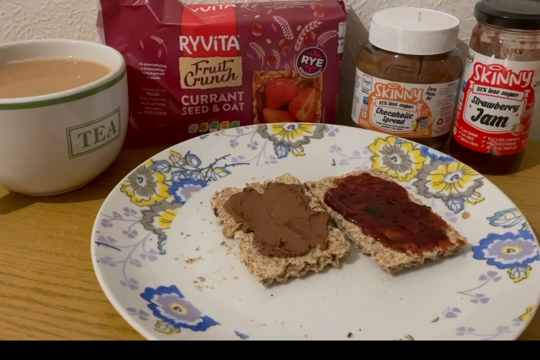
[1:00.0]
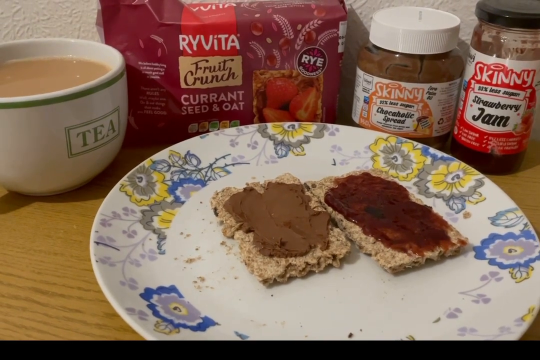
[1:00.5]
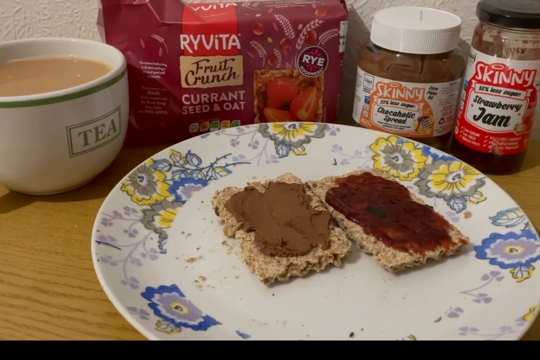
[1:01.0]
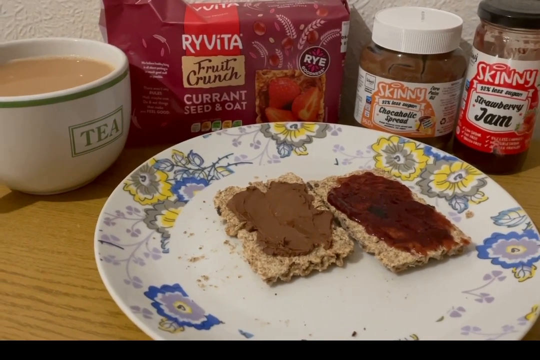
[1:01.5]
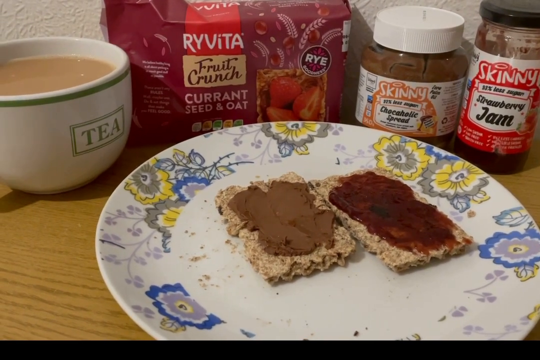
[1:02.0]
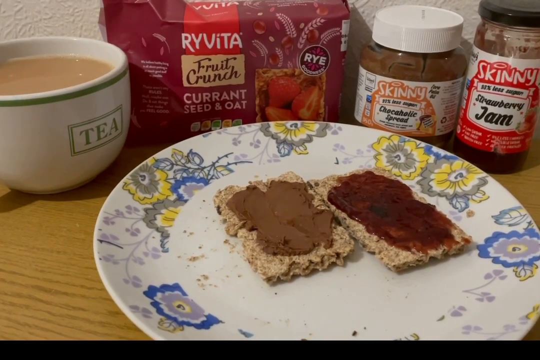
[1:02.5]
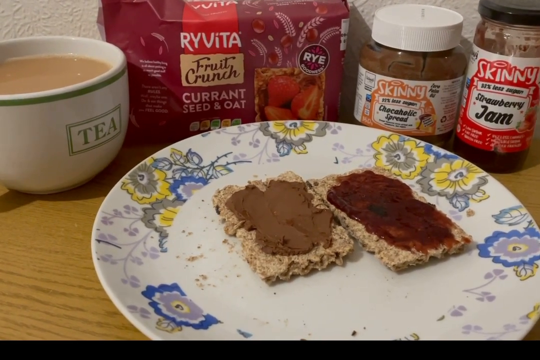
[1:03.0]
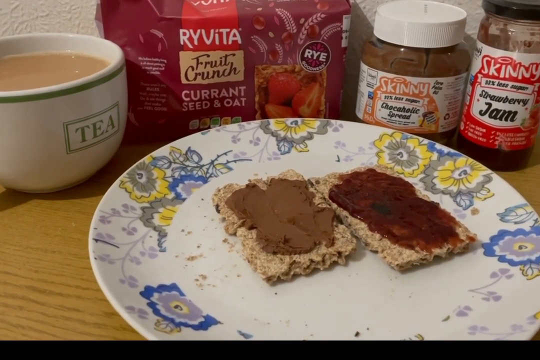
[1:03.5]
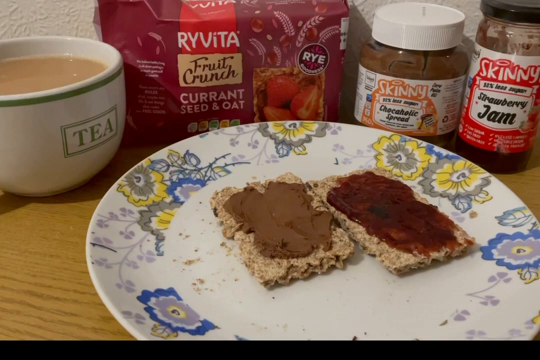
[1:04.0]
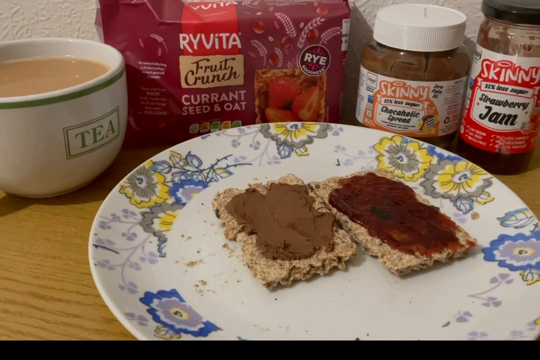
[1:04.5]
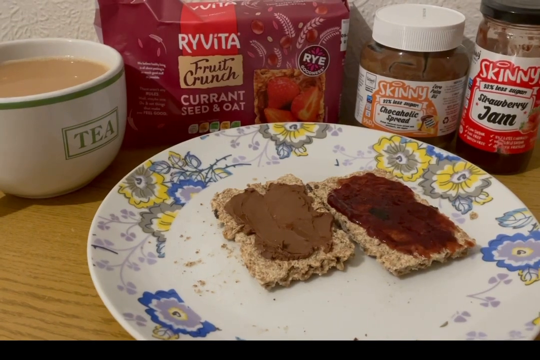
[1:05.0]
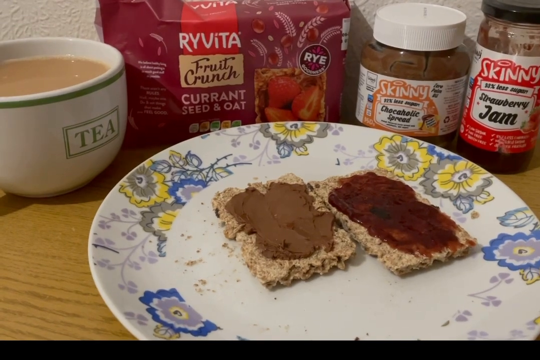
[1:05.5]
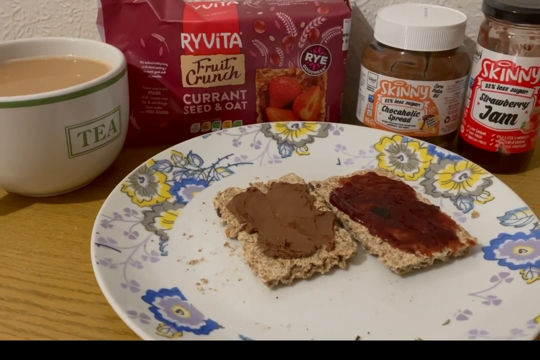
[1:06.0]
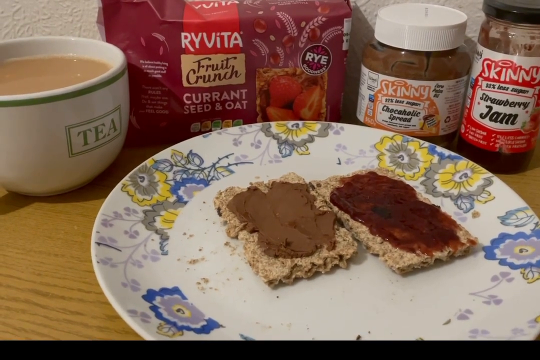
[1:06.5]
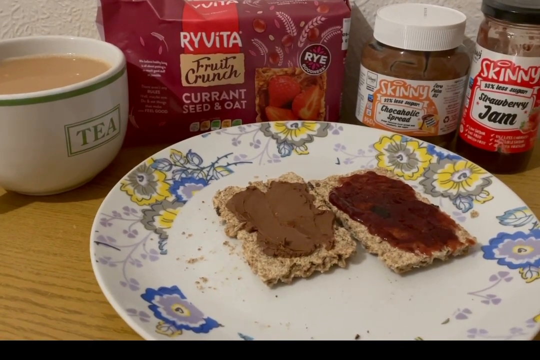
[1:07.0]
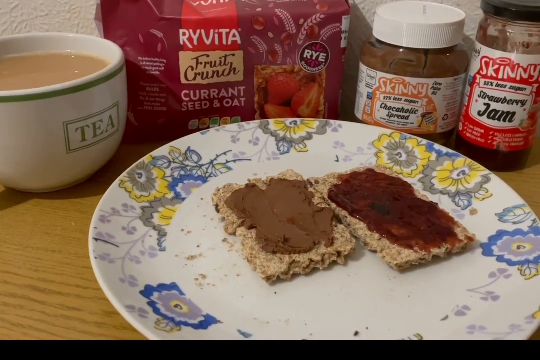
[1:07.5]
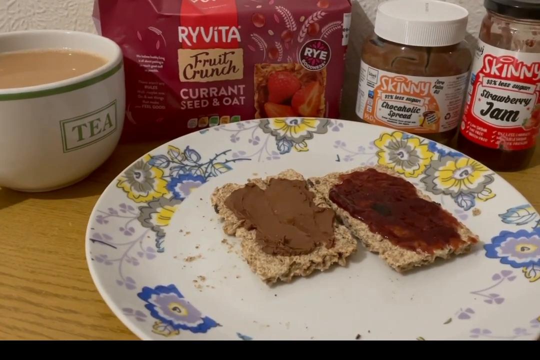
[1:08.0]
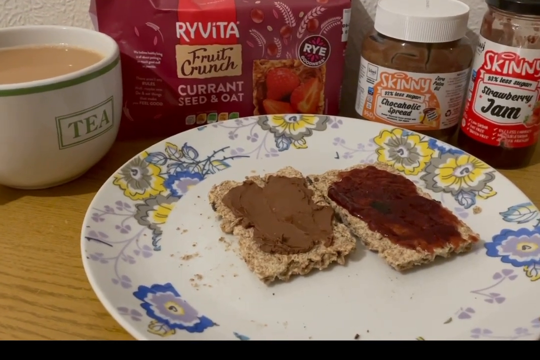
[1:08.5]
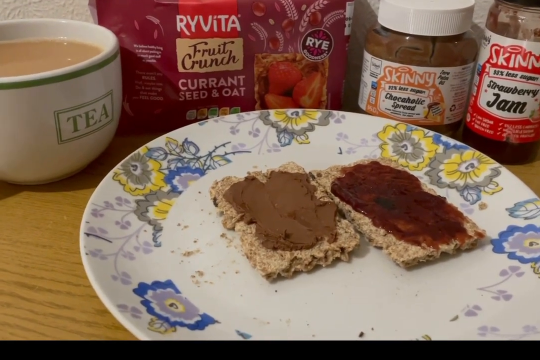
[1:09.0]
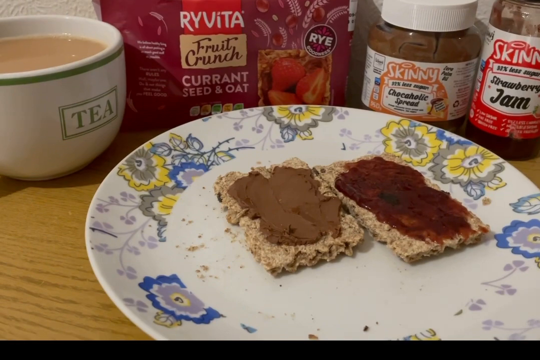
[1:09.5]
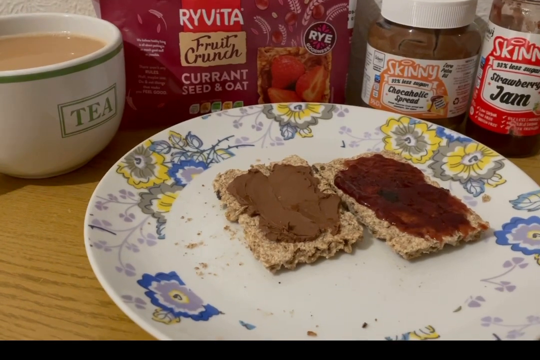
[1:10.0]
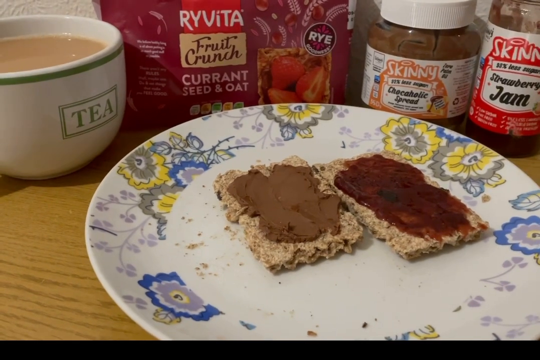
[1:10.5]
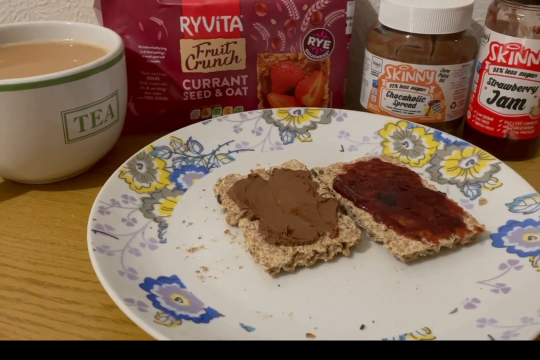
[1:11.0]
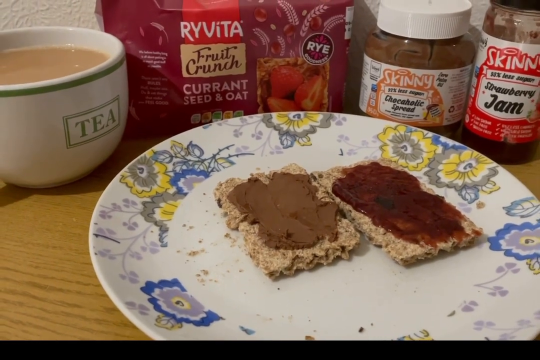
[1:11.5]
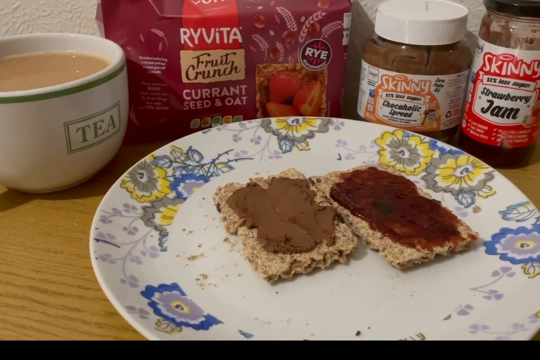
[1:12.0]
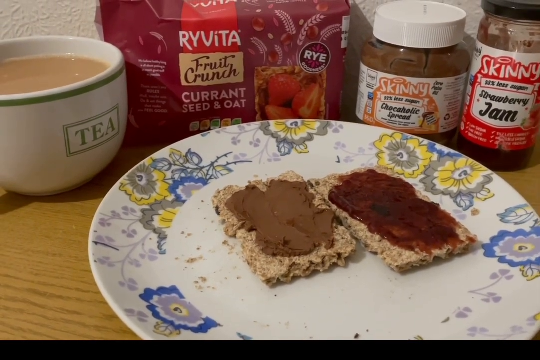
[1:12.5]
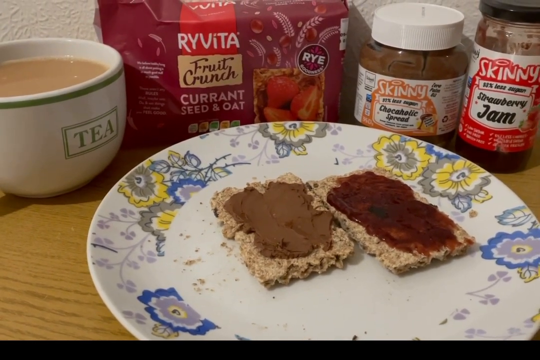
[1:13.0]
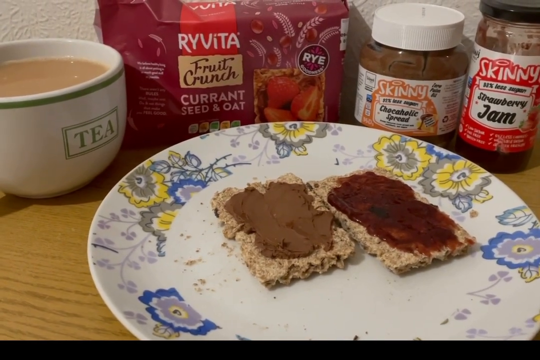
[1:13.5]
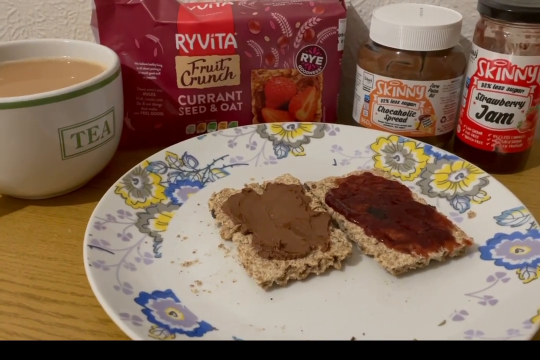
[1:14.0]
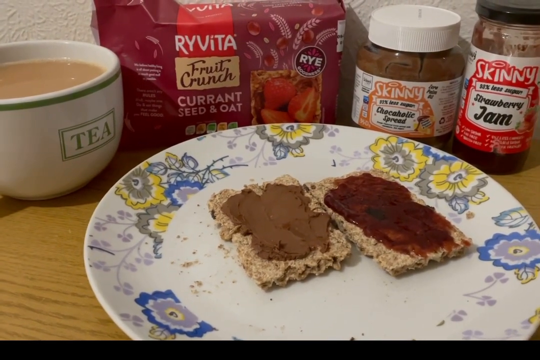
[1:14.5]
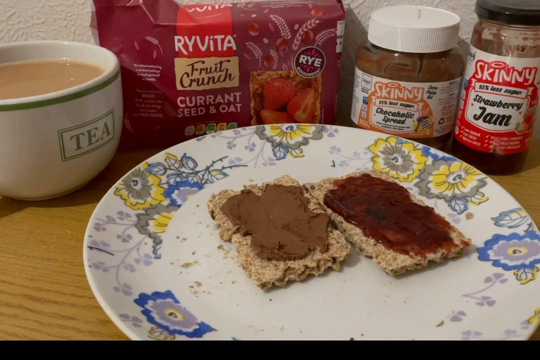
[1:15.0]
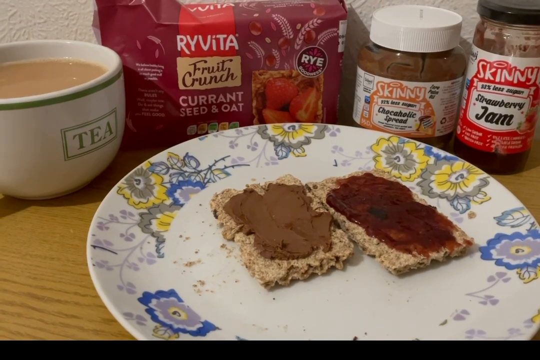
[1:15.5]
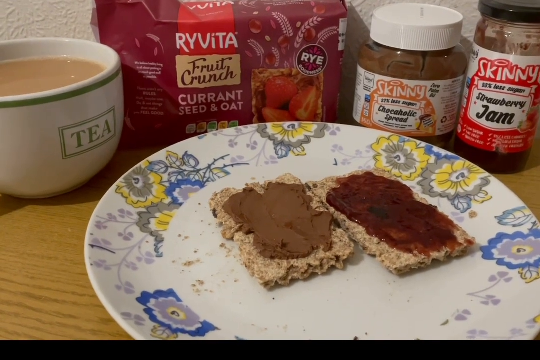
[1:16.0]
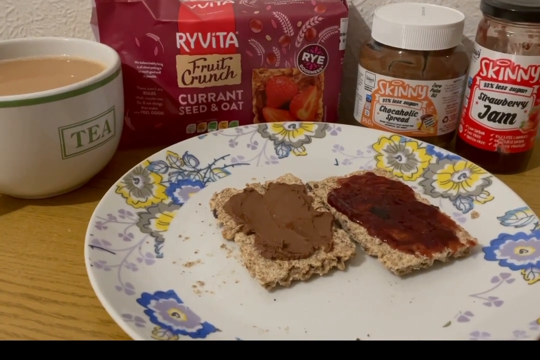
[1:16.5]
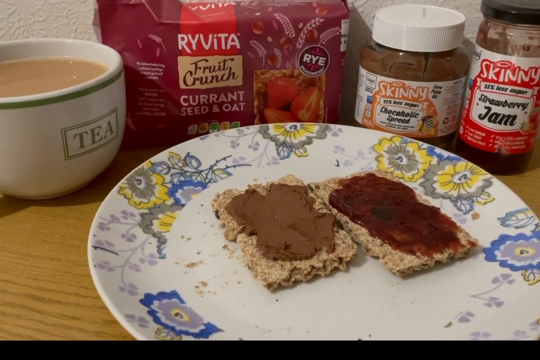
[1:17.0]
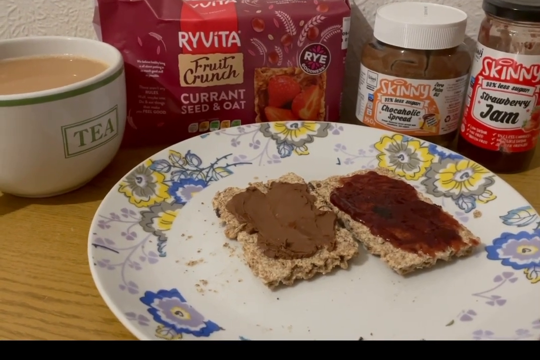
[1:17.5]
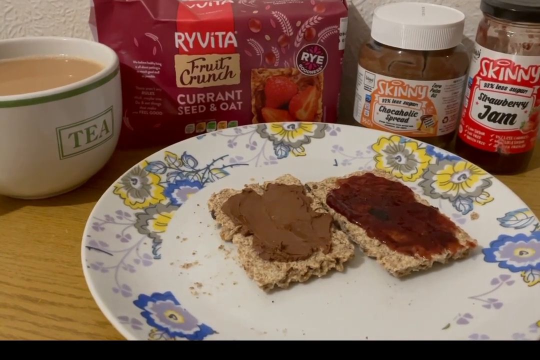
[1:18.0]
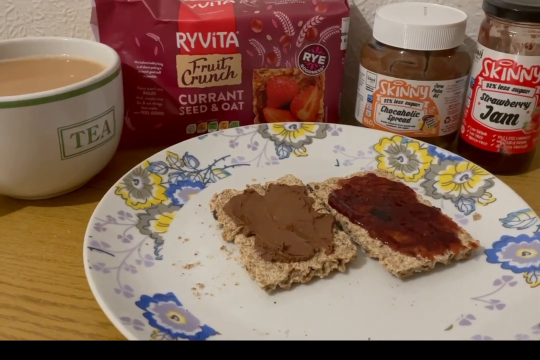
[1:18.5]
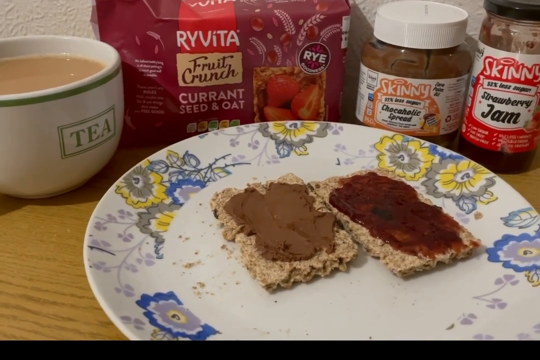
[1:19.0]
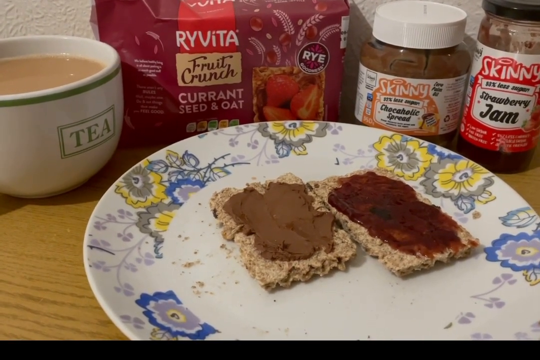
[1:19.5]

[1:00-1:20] The camera wobbles and moves slightly, looking at the plate with crumbs around the crisp bread; nothing else happens apart from the camera movement. The crisp bread is in the centre of the plate on the white base, with untidily applied chocolate spread and strawberry jam that do not reach the edges. The strawberry jam falls short in several areas, and the chocolate spread is even less well applied, leaving bare crisp bread corners and sides. The skinny strawberry jam has a band across the label, below "skinny" and above "strawberry jam", which reads "less sugar", possibly "32% less sugar". The skinny chocoholic spread has a similar band denoting how much less sugar it has than usual. The Ryvita fruit crunch currant seeds and oat has a label denoting that it is rye, on largely dark, deep red packaging. "Ryvita" is in white font on a red band that stops near the top of the packaging. Below that, in a light brown box, is "fruit crunch", and below that is "currant seeds and oat" on the dark, deep burgundy red of the packaging.